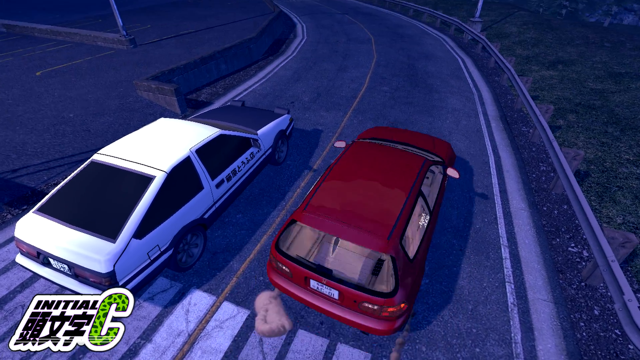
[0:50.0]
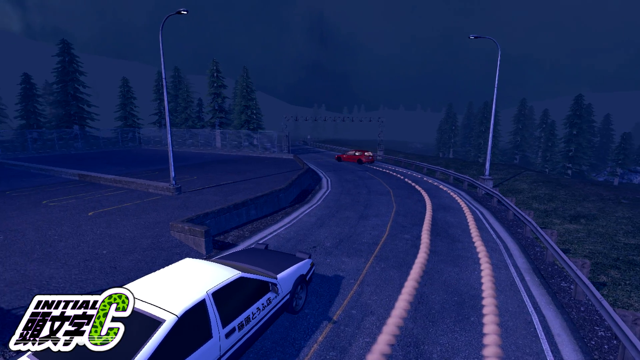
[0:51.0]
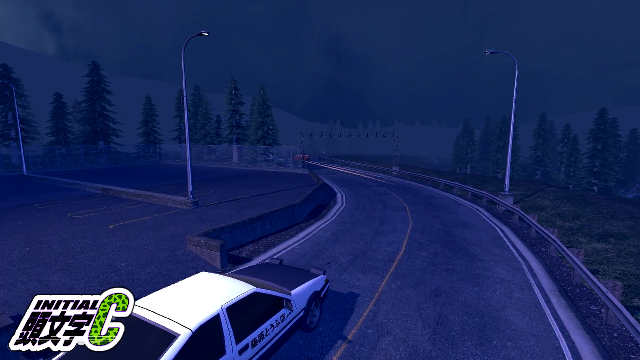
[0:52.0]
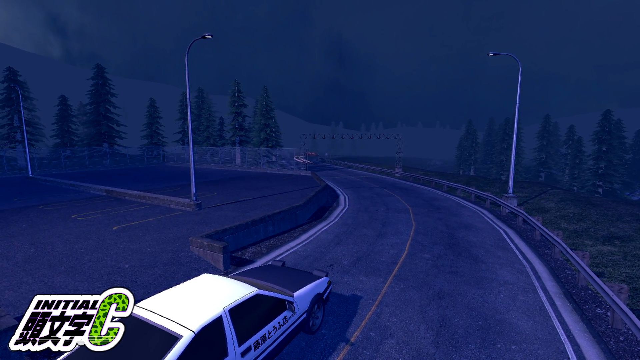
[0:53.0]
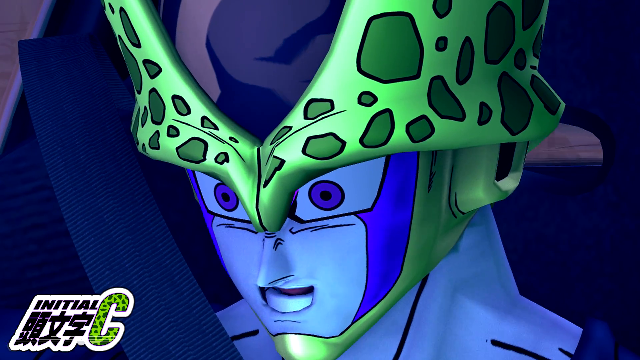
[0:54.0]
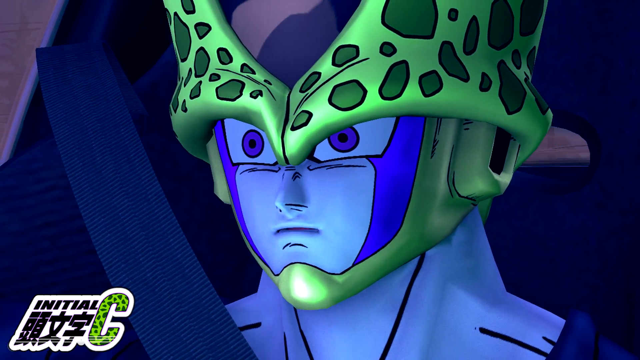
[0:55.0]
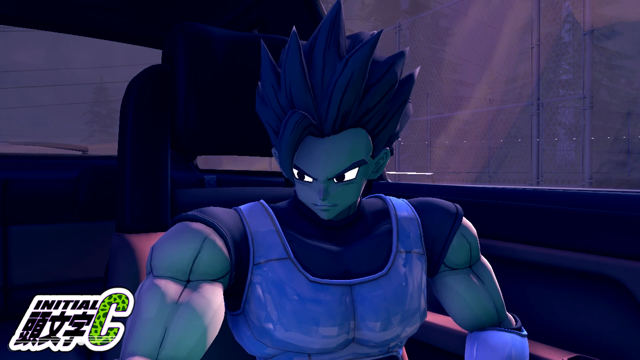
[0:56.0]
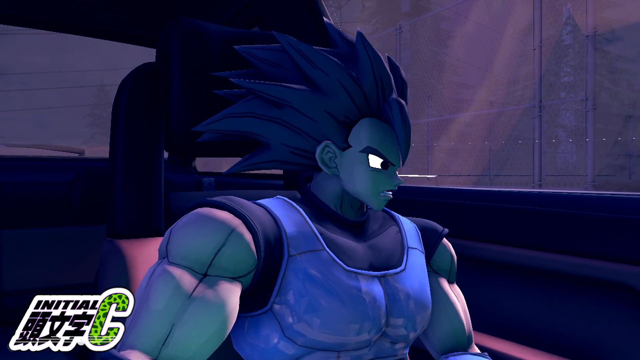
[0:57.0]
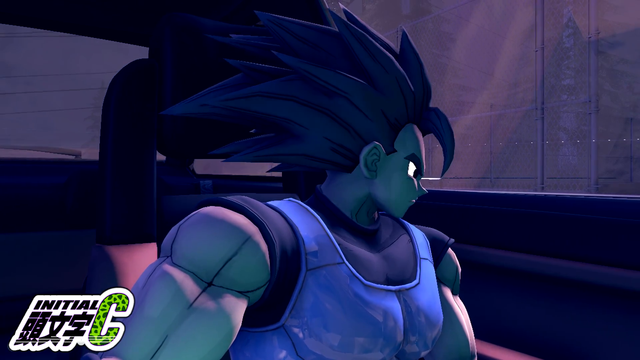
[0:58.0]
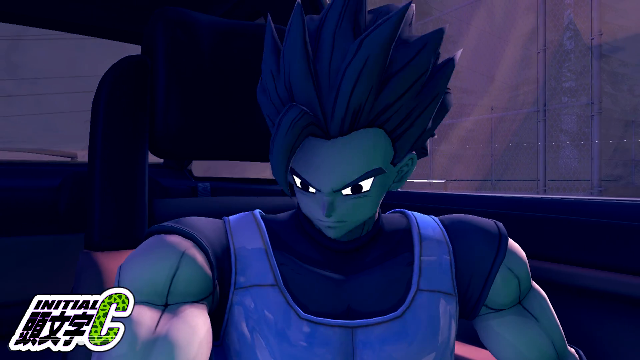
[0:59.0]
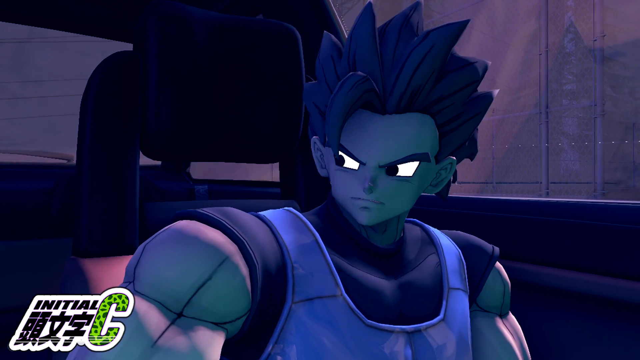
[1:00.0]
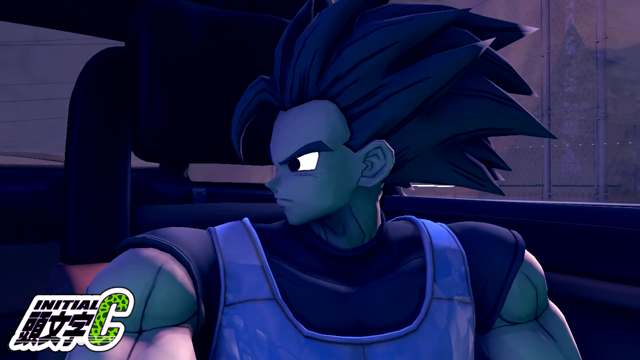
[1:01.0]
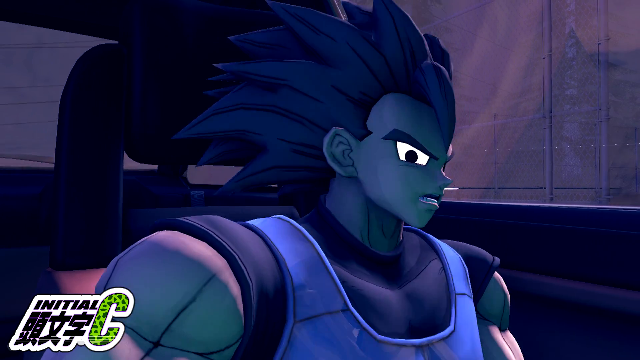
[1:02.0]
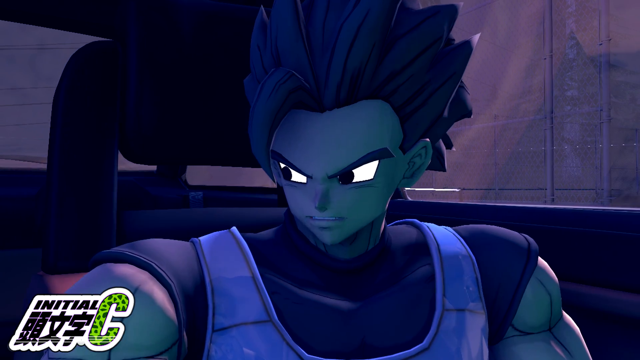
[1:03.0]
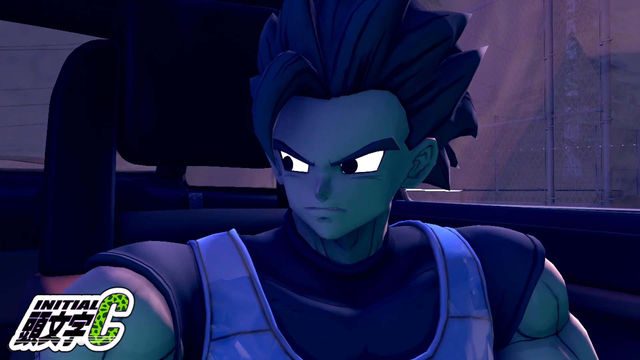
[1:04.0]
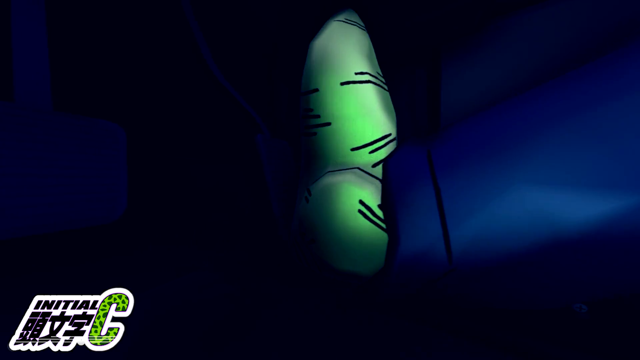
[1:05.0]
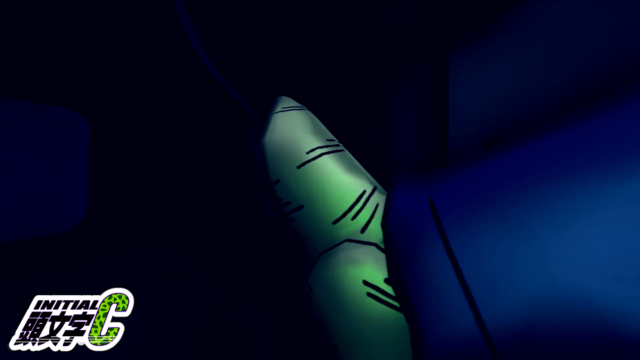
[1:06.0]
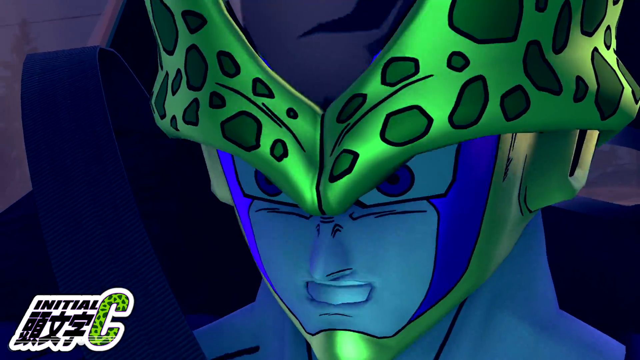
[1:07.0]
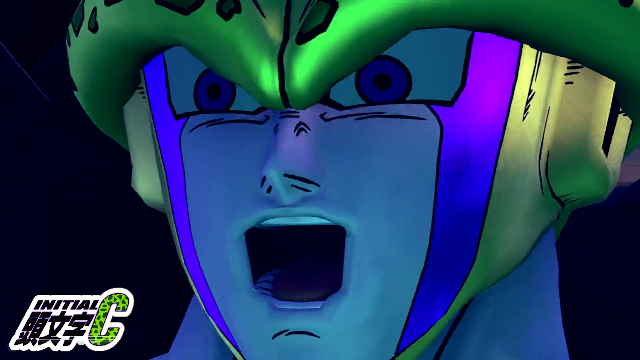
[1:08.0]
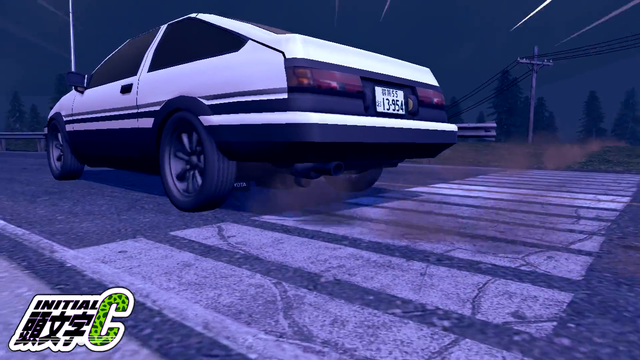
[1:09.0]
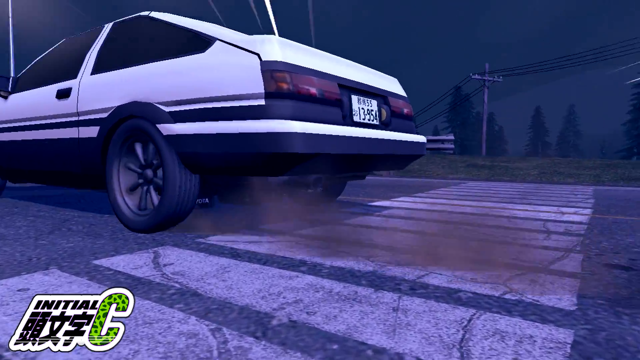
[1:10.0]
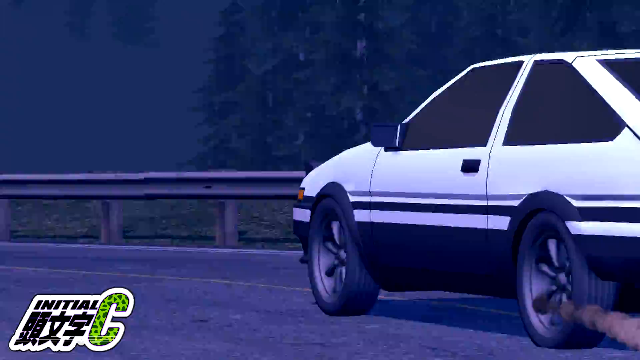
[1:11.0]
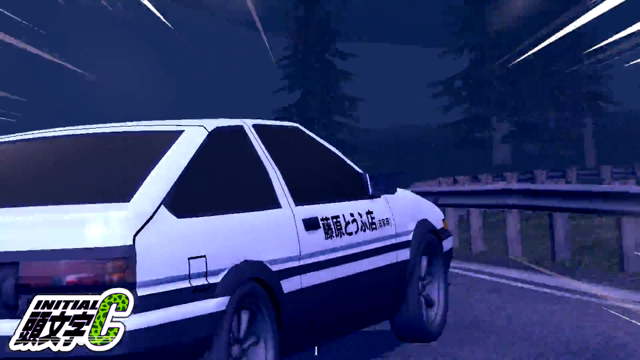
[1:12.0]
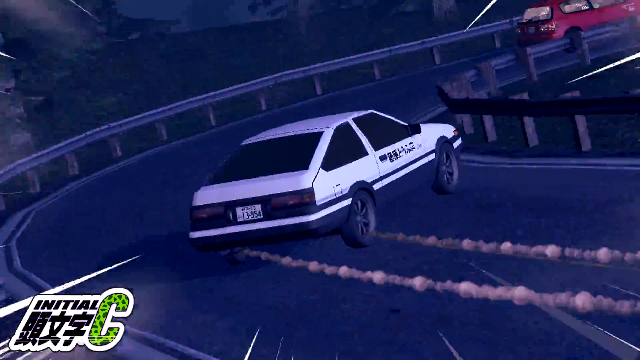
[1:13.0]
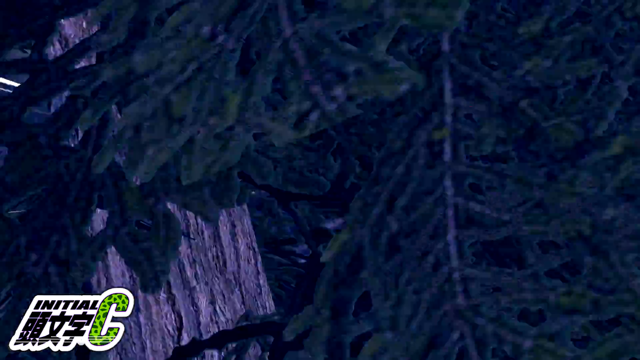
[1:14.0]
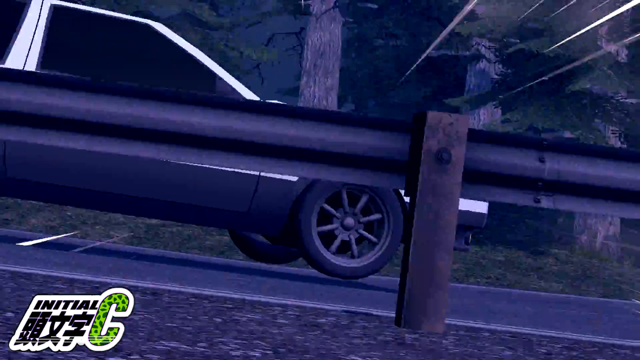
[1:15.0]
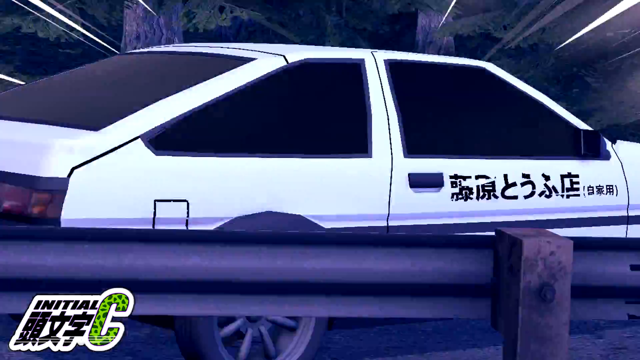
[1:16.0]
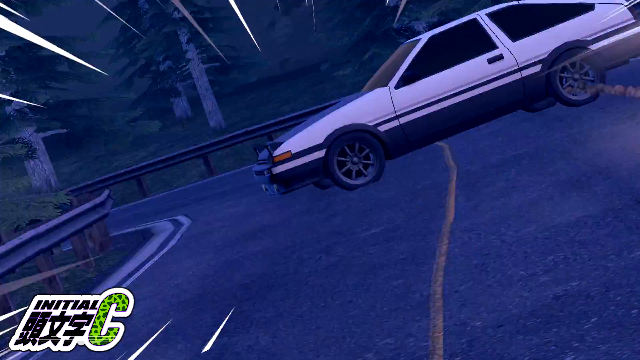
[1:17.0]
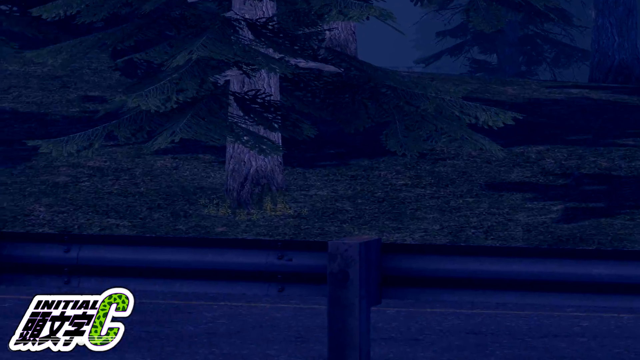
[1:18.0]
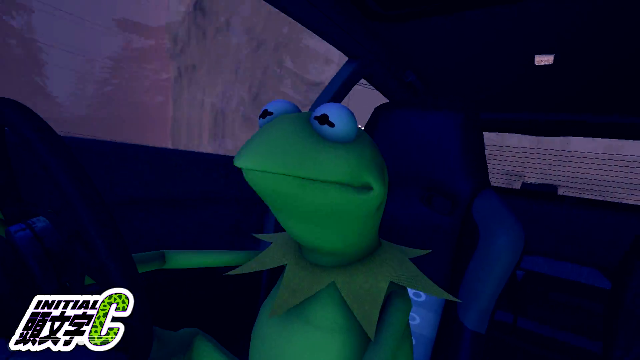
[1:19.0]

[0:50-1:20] Kermit the Frog takes off at a very fast speed in a red car, while the Dragon Ball characters look around for him in their white car. The driver apparently puts his foot down on the pedal, and they easily catch up with Kermit's car. Speed lines appear behind their car as they swerve around corners and curbs. A small rice-burner-type car is mentioned. The graphics look like they were made on a PlayStation 2 or similar, and the video is probably fan-made, looking almost amateurish rather than official. The Dragon Ball characters seem to be winning the street race so far.